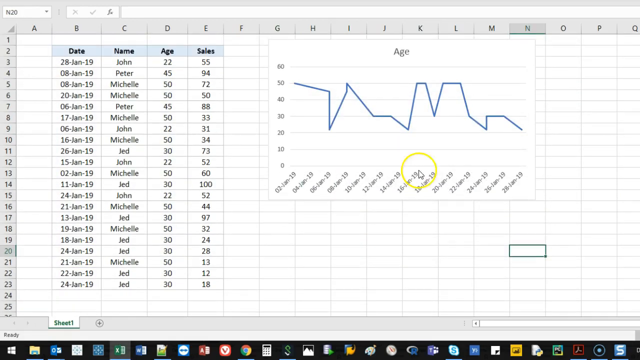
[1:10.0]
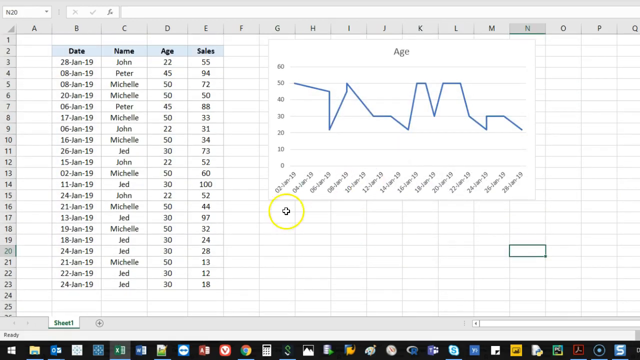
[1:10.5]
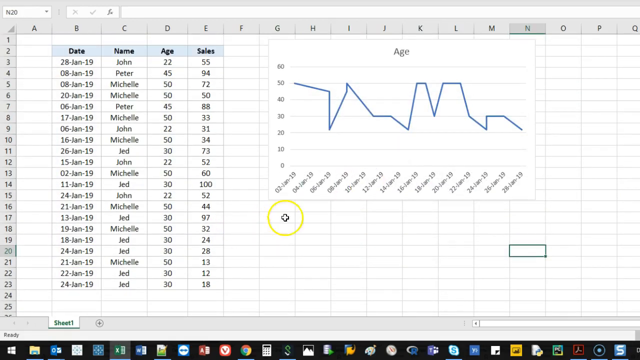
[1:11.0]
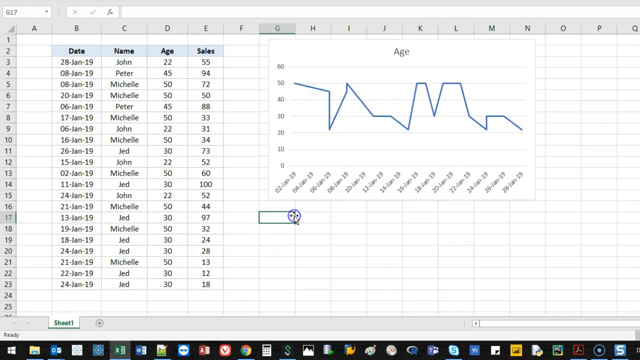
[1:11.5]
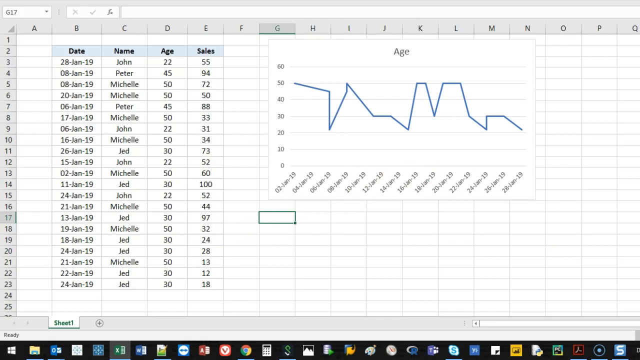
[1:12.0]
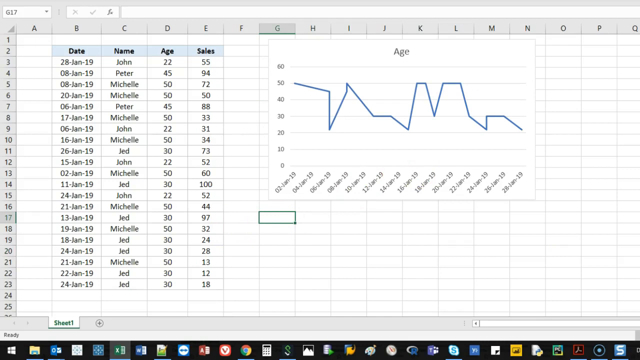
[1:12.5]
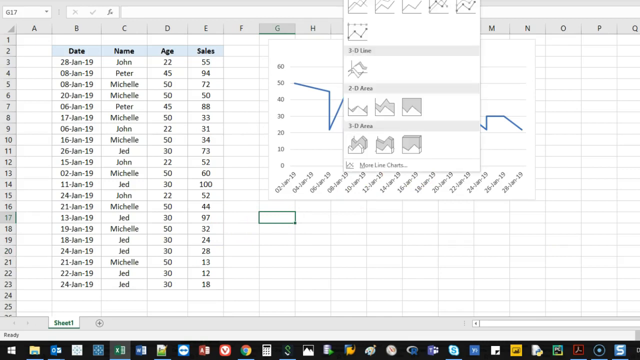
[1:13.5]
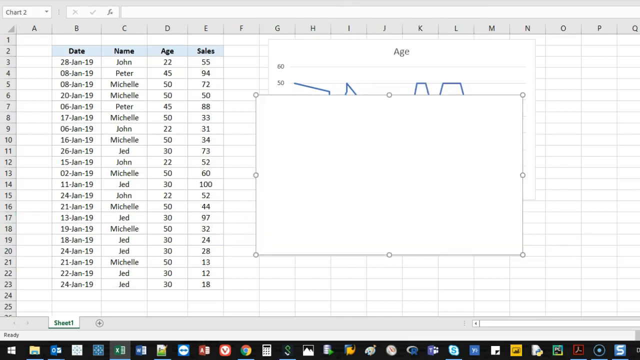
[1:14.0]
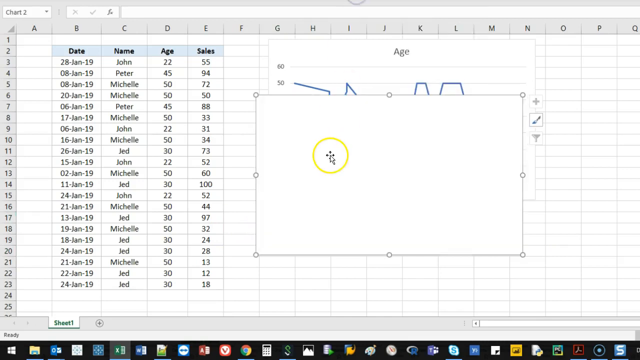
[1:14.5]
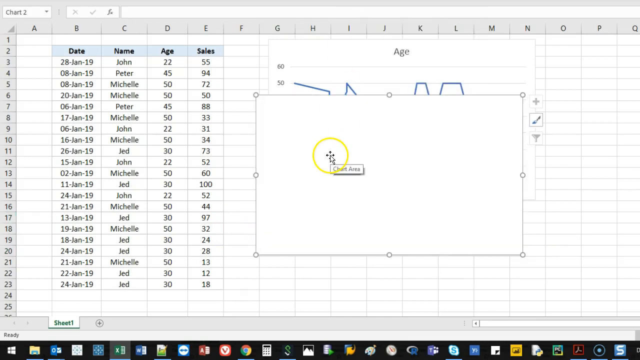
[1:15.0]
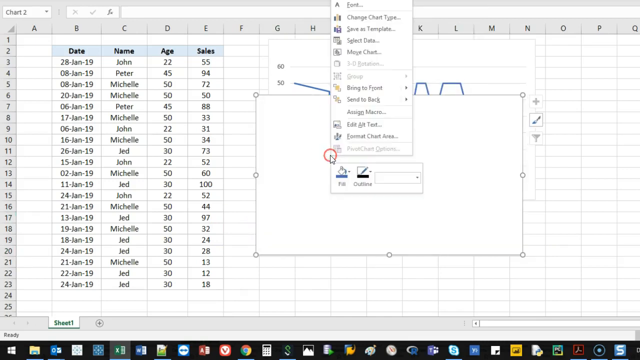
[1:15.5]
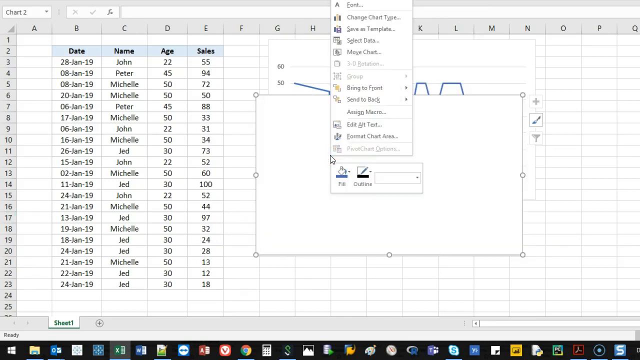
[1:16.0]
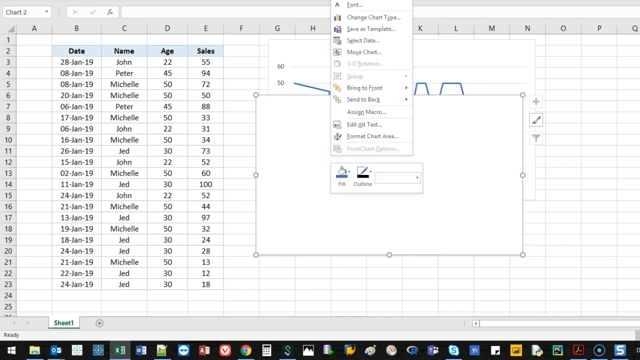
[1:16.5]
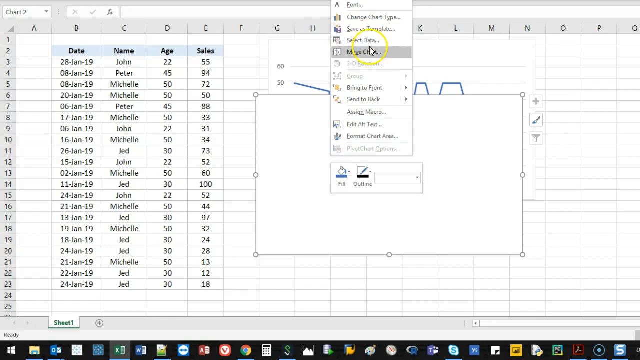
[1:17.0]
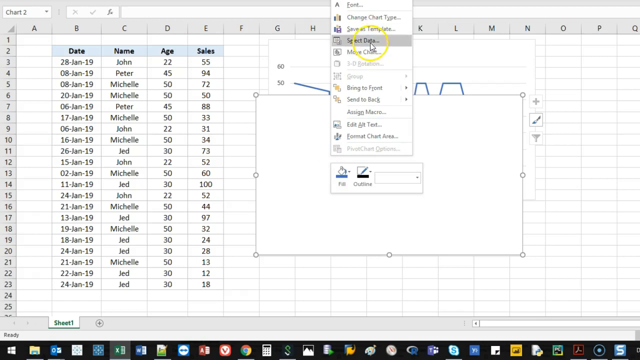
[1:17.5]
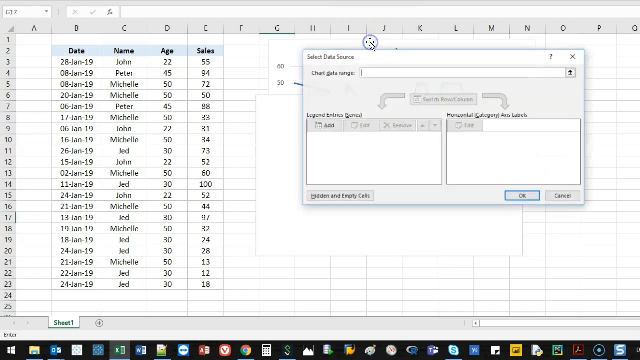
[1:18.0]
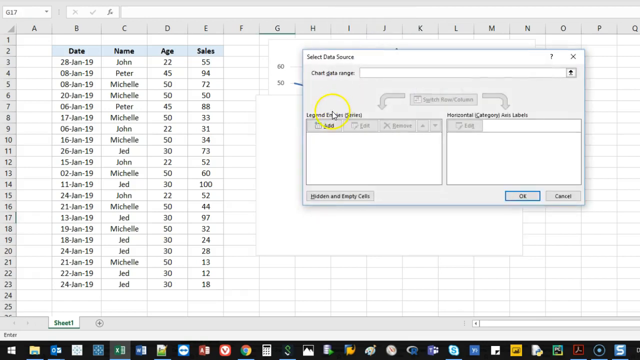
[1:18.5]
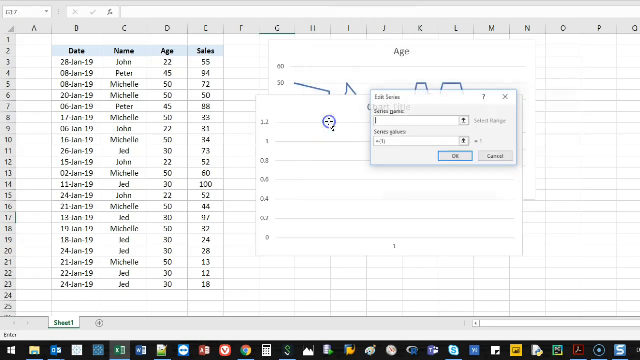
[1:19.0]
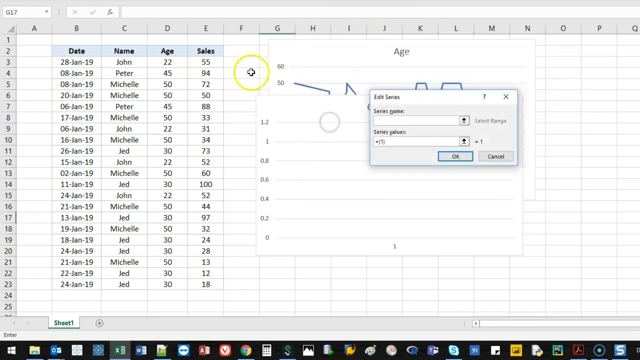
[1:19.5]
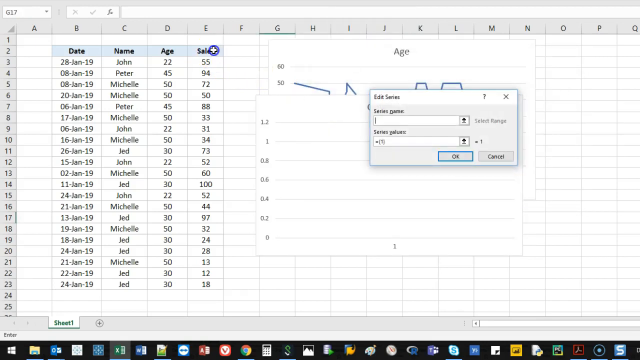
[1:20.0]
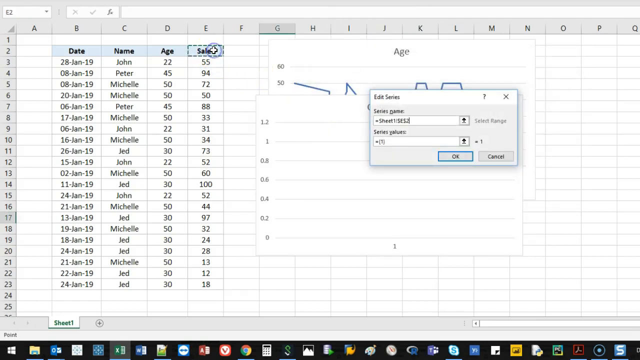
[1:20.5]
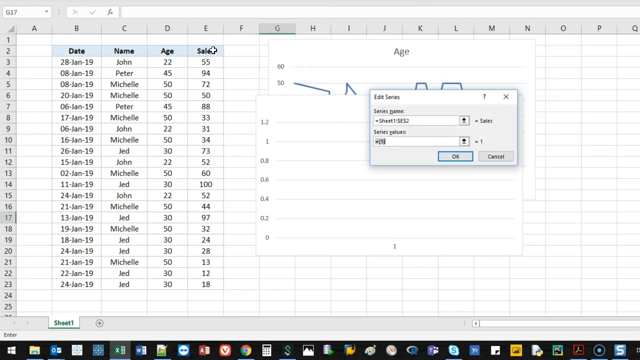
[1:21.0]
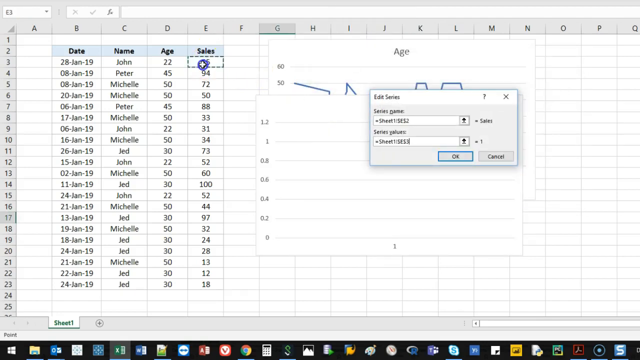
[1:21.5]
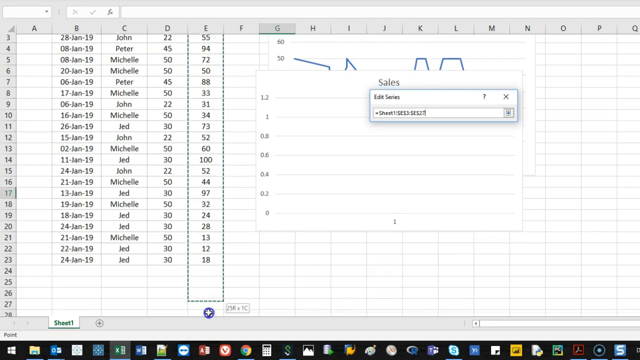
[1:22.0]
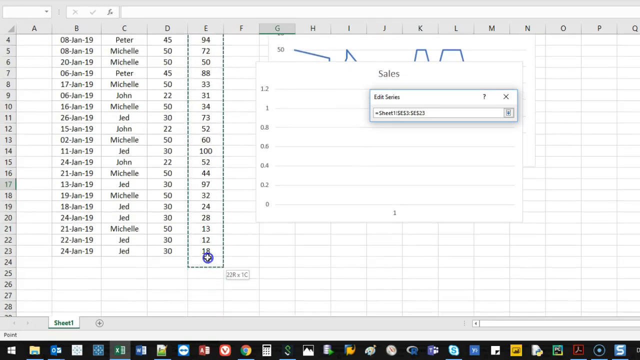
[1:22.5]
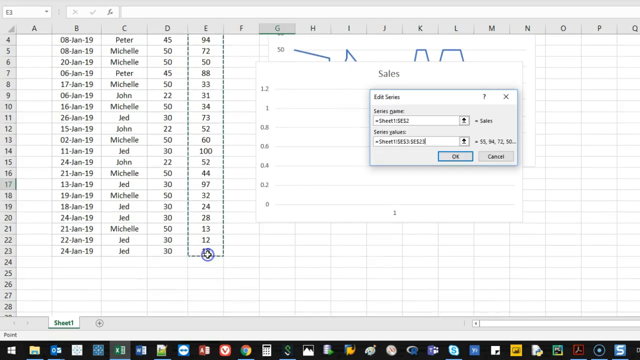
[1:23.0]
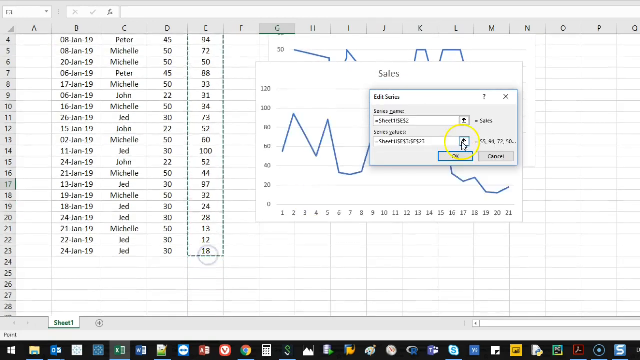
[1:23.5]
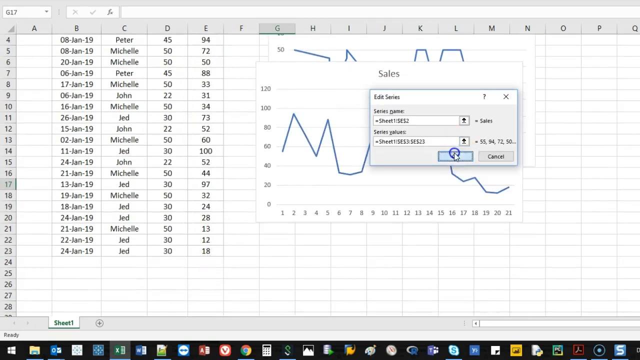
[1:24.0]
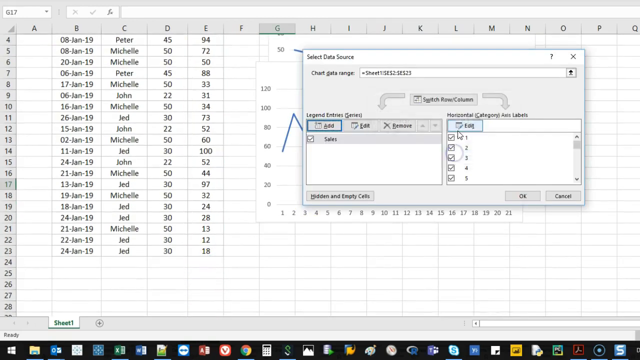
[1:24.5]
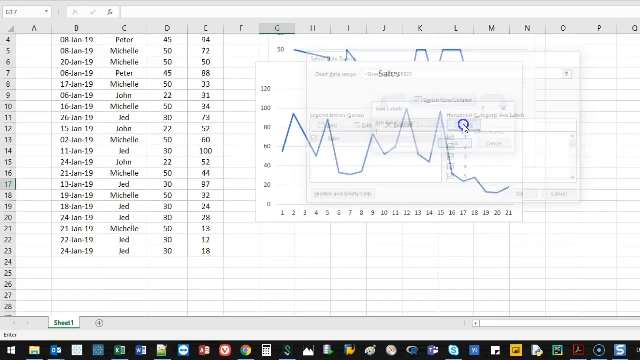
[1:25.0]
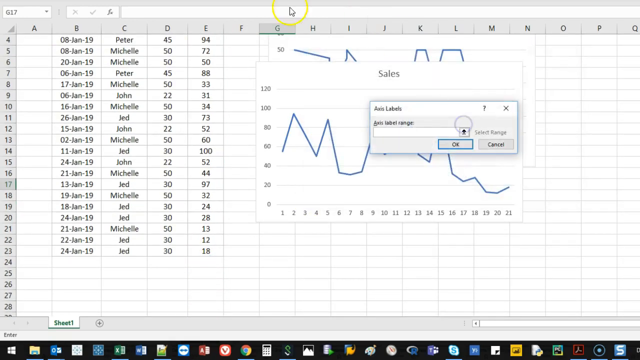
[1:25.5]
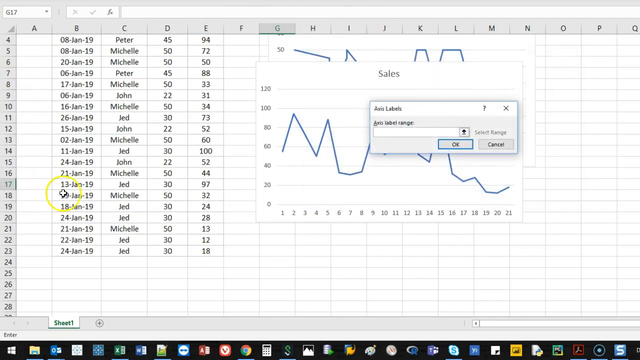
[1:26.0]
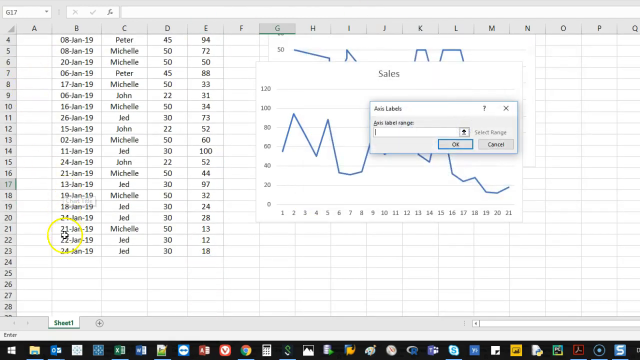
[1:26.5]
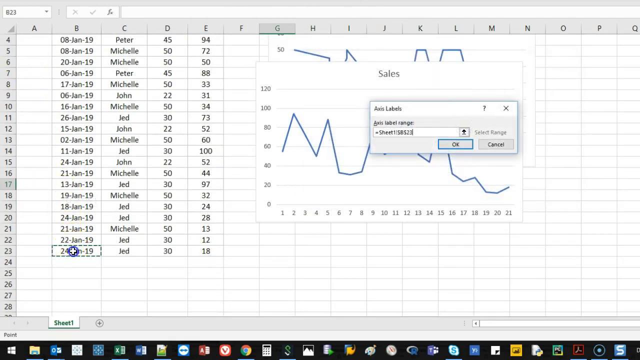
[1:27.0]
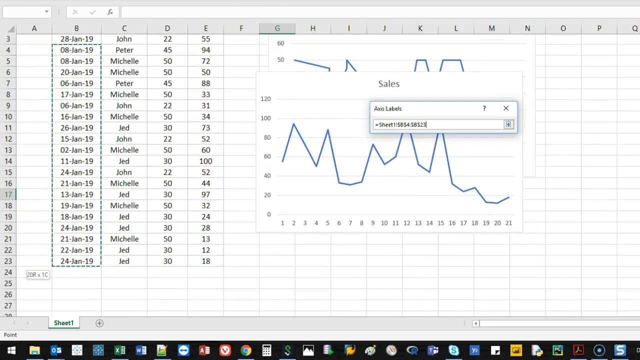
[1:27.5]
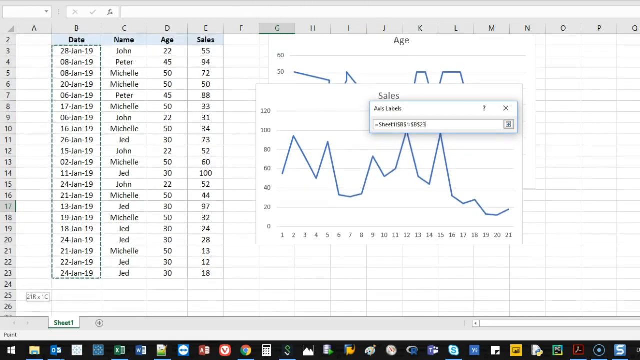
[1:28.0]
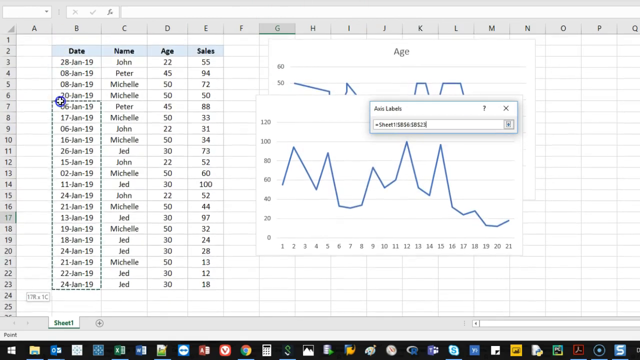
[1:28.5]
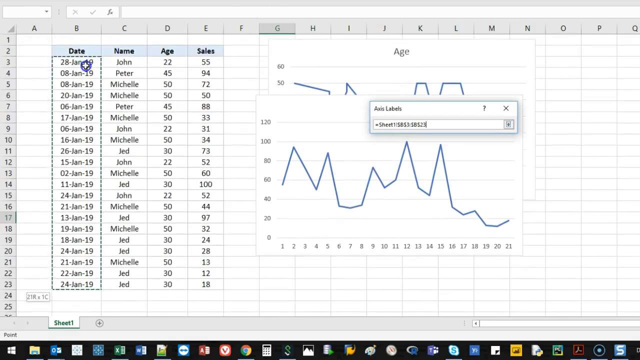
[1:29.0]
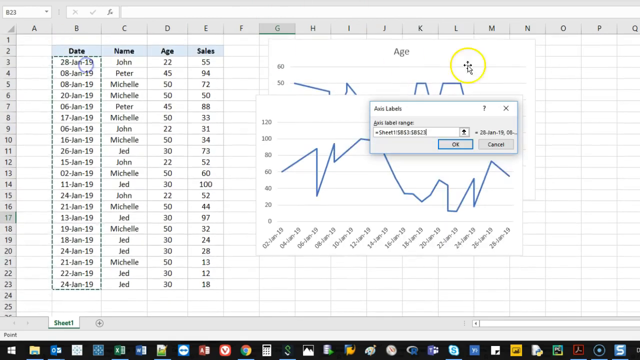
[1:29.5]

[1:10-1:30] A spreadsheet shows columns for date, name, age and sales on the left and, to the right, a line graph for the age data. The cursor selects the G17 cell. The user then selects something toward the top of the screen, though the top toolbars are cut off from view, and a menu pops up with several variations of 2D line, 3D line, 2D area and 3D area charts. The user selects the first option, and a white rectangular box appears, slightly covering the age chart on the right side of the spreadsheet. They right-click on the front of this box and select the Select Data option. A Select Data Source window pops up, and under the Legend Entries panel on the left the user clicks the first button, bringing up a smaller window that says "edit series" with text input boxes for series name and series value. The cursor selects all of the cells under the sales column, from E3 to E23, then clicks OK in the Edit Series window, returning to the Select Data Source window. In the Horizontal Category Axis Labels panel on the right, the user clicks a button, bringing up an Axis Labels window with a text input box for Axis Label Range. The cursor selects all of the dates under column B, from B23 up to B3. The value for the axis label range changes, and the user clicks OK.